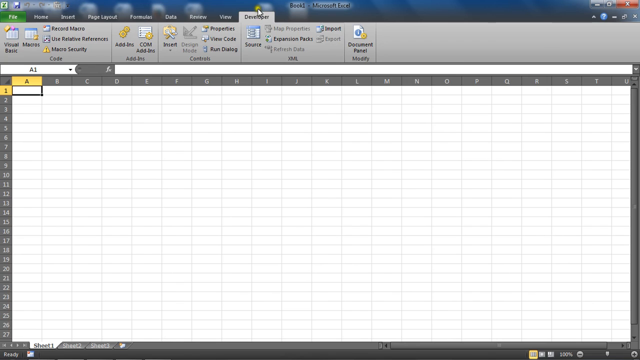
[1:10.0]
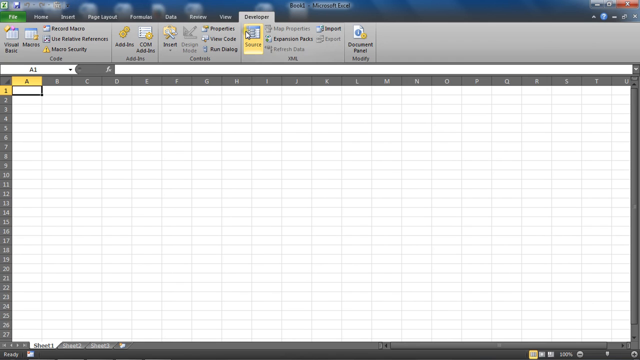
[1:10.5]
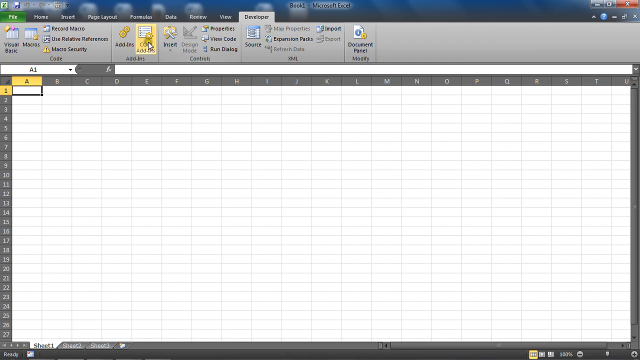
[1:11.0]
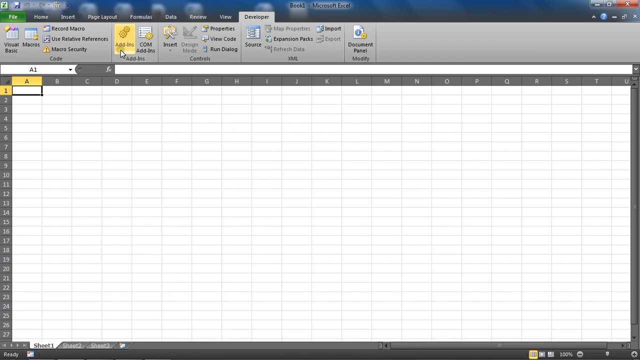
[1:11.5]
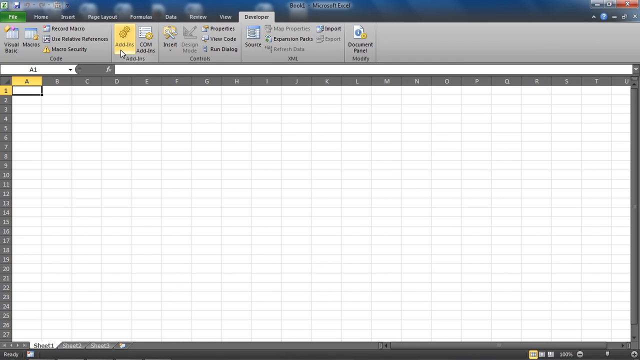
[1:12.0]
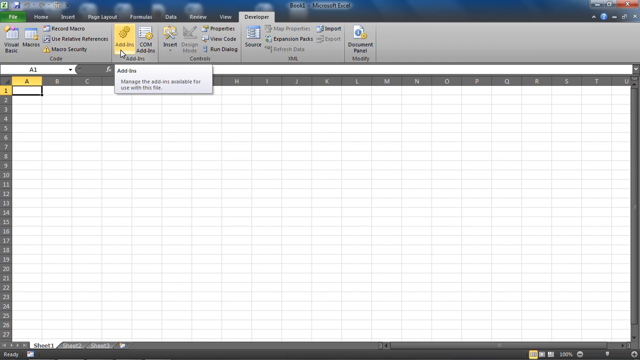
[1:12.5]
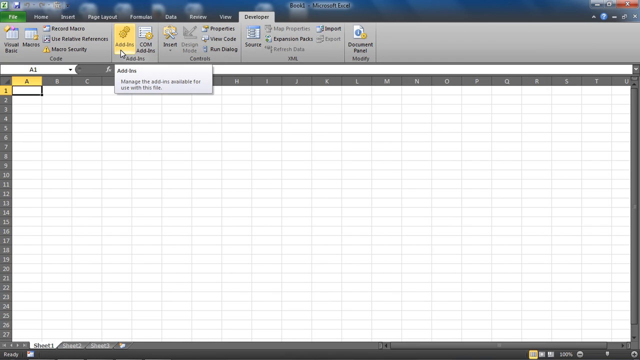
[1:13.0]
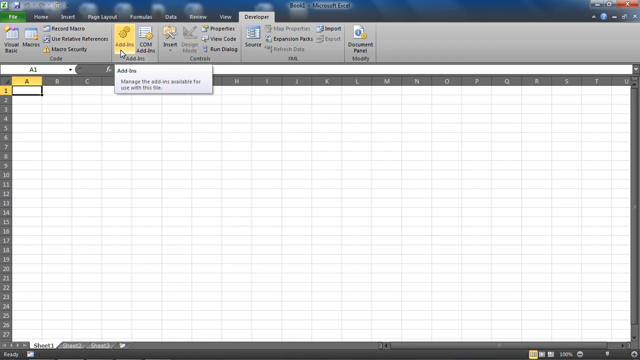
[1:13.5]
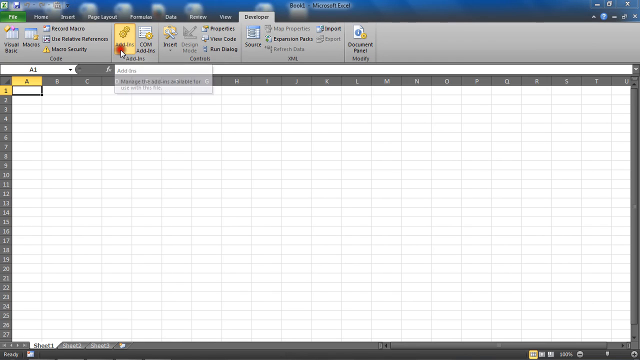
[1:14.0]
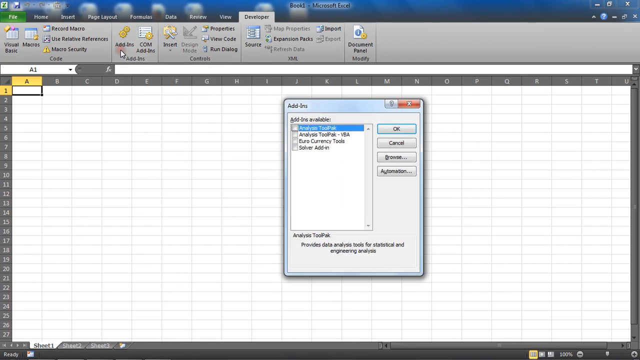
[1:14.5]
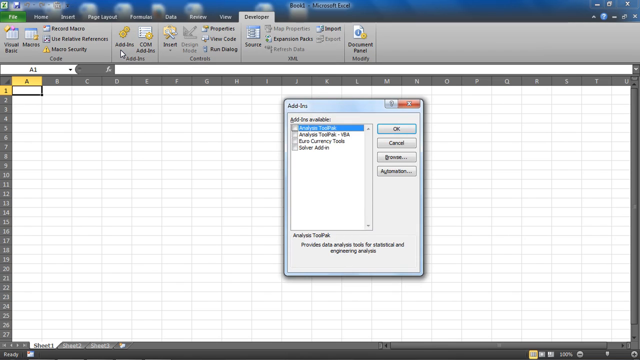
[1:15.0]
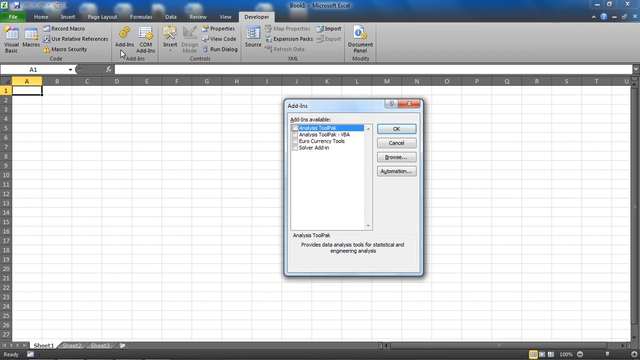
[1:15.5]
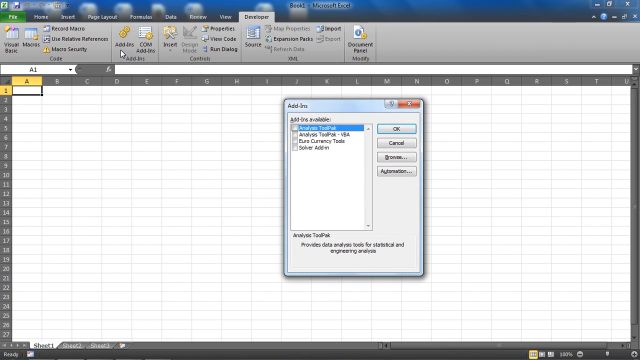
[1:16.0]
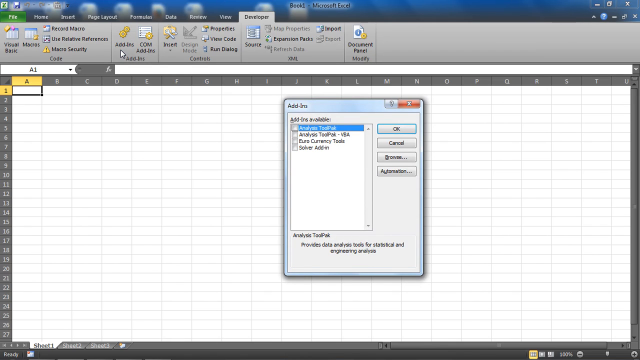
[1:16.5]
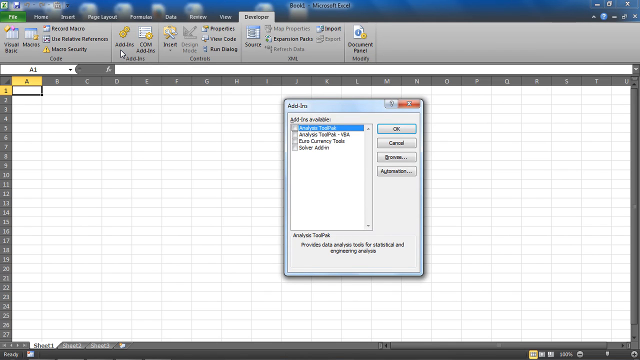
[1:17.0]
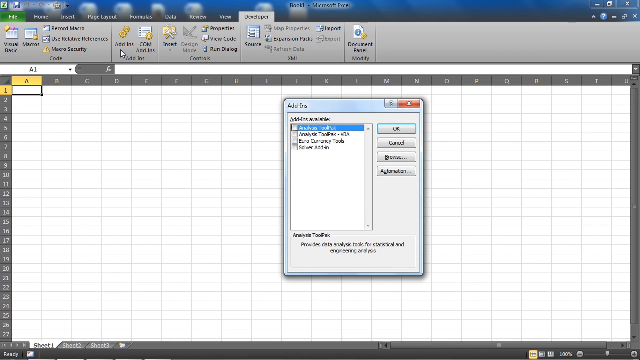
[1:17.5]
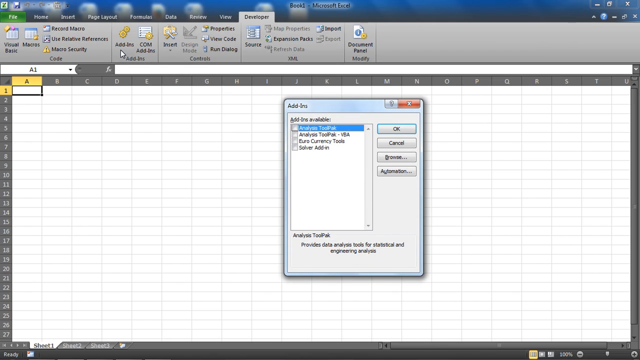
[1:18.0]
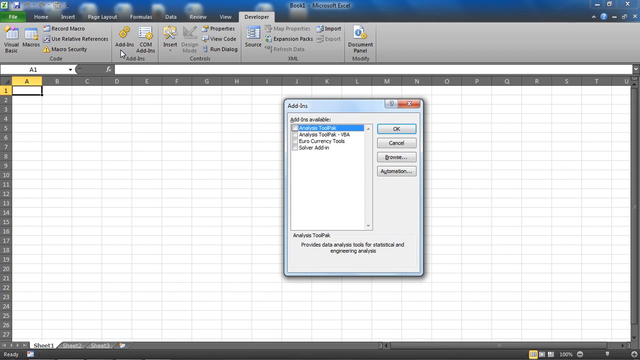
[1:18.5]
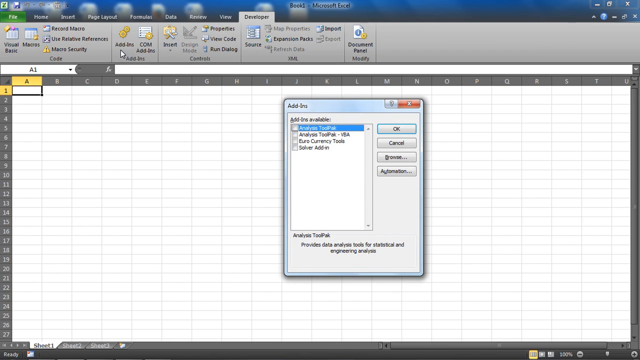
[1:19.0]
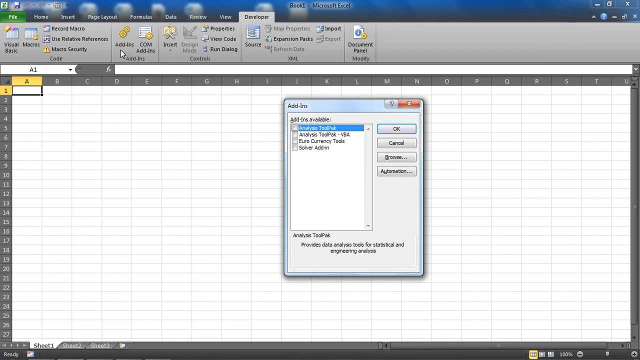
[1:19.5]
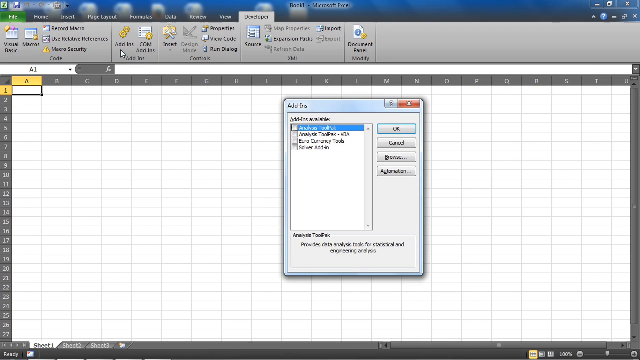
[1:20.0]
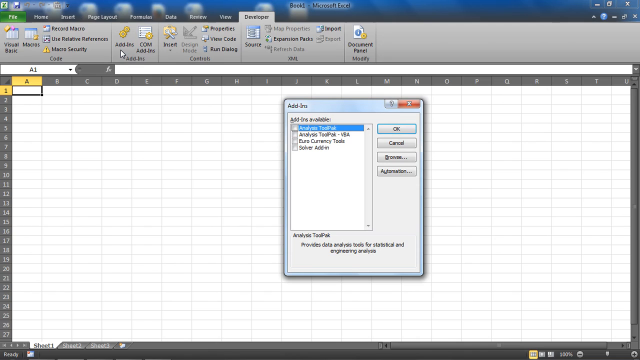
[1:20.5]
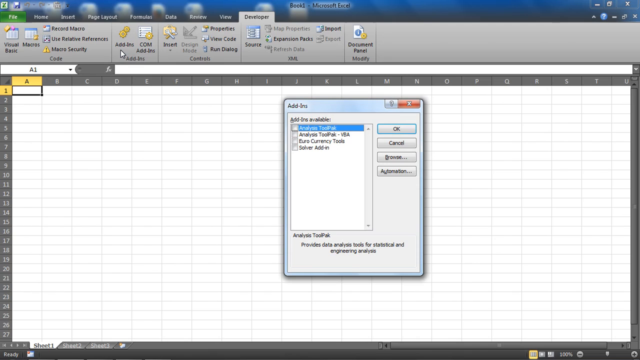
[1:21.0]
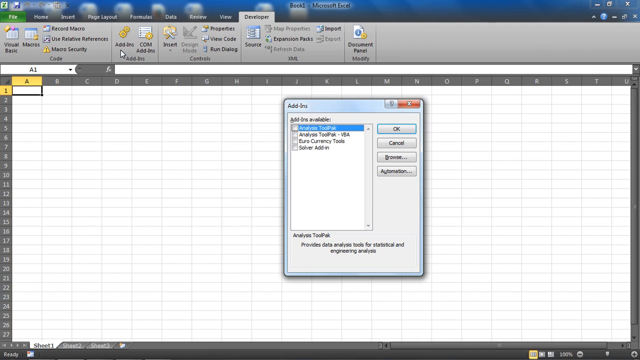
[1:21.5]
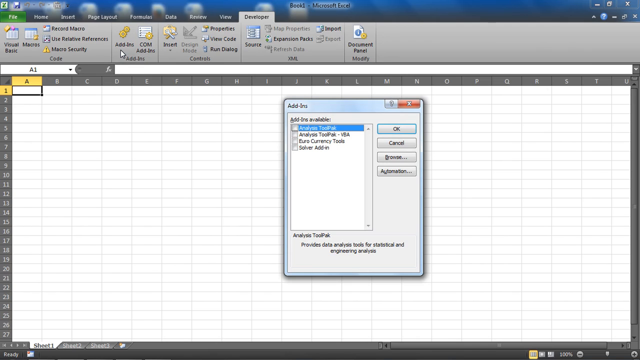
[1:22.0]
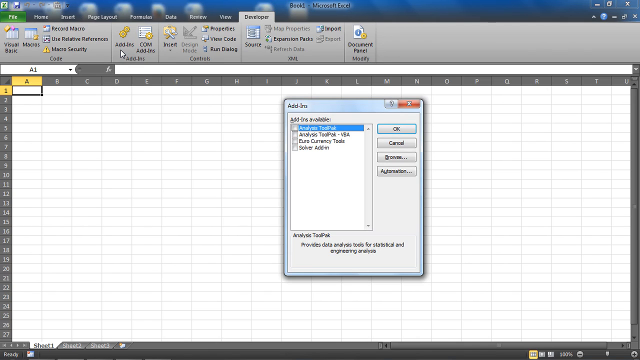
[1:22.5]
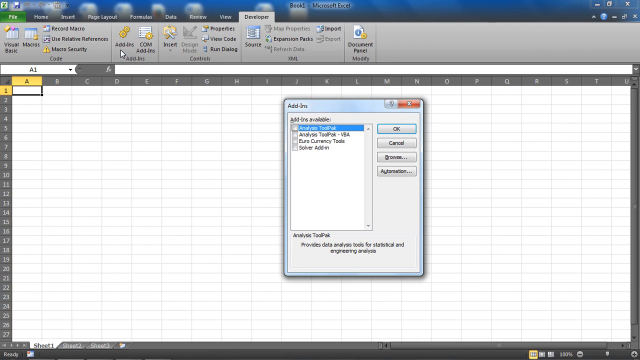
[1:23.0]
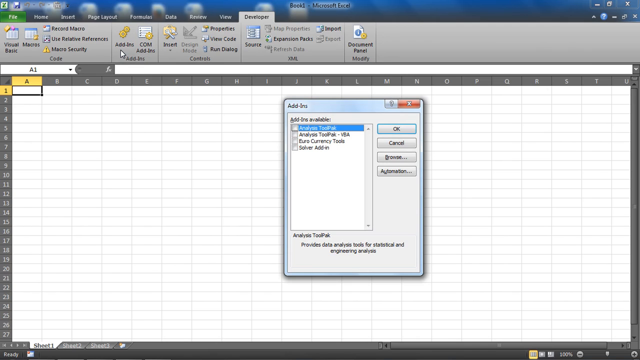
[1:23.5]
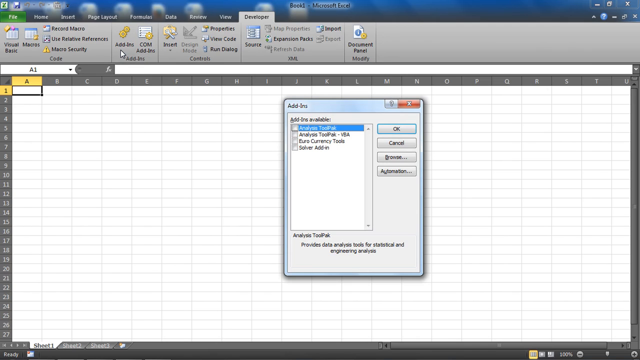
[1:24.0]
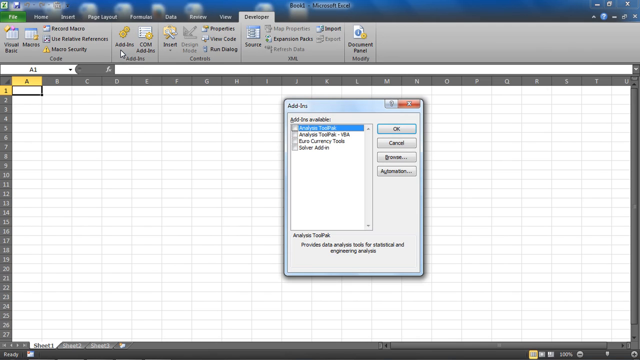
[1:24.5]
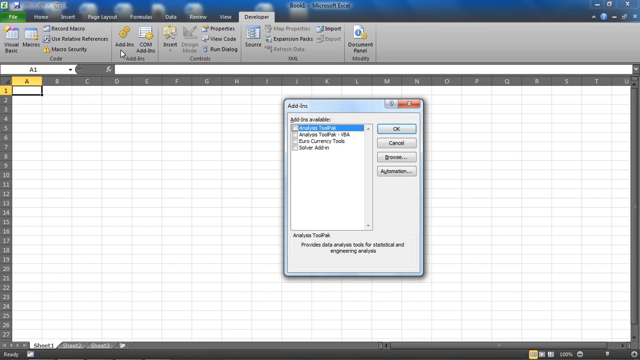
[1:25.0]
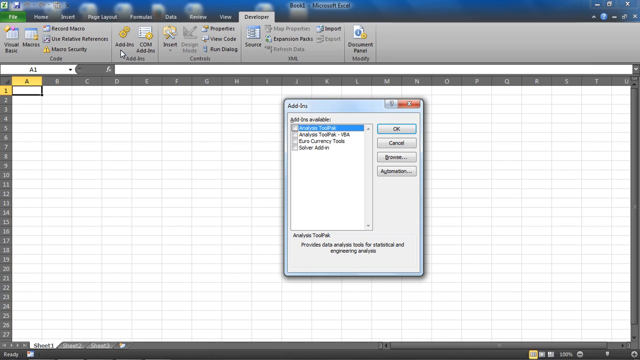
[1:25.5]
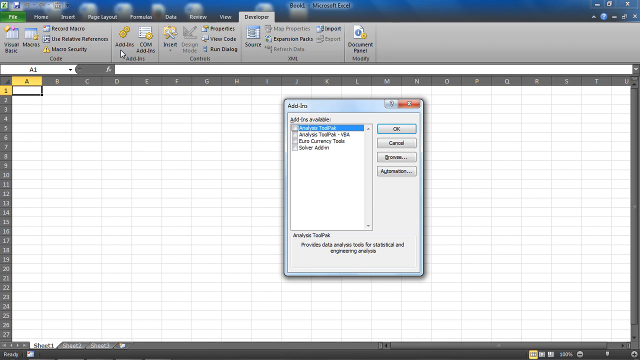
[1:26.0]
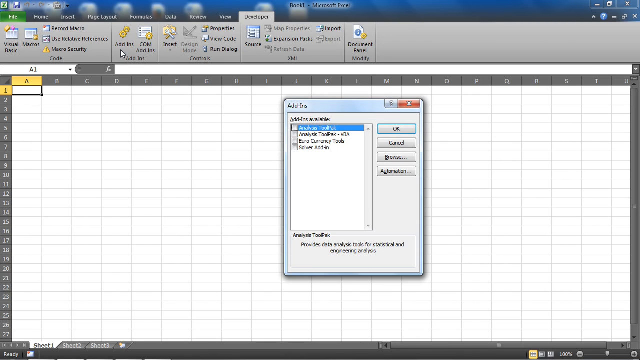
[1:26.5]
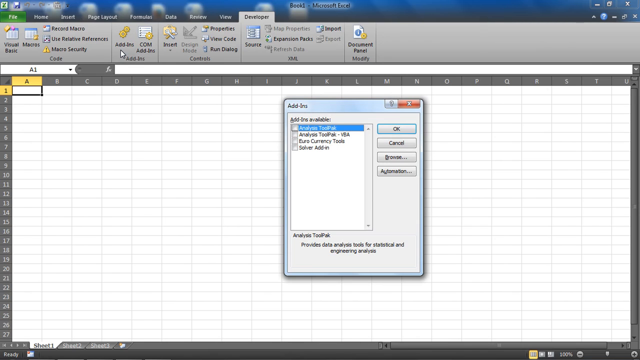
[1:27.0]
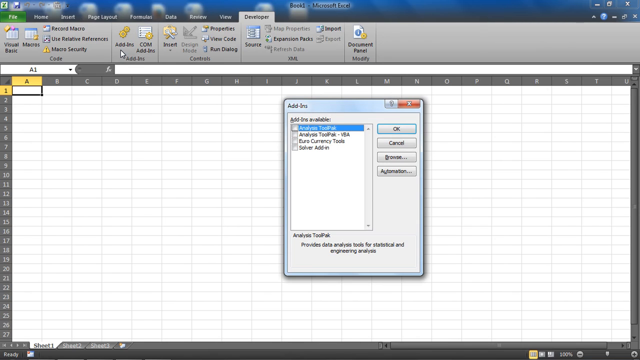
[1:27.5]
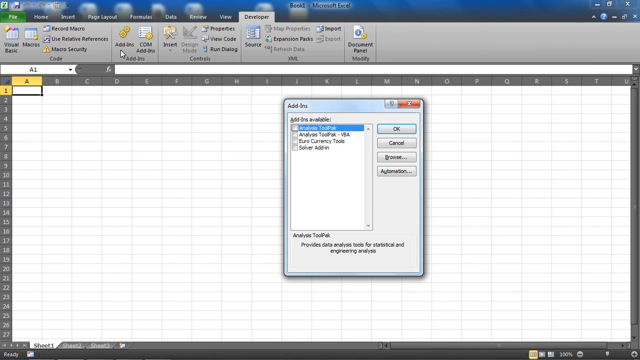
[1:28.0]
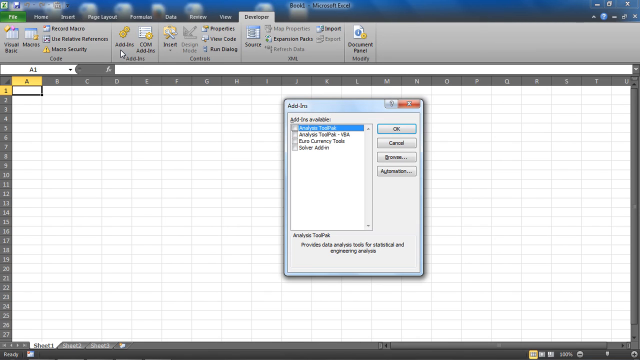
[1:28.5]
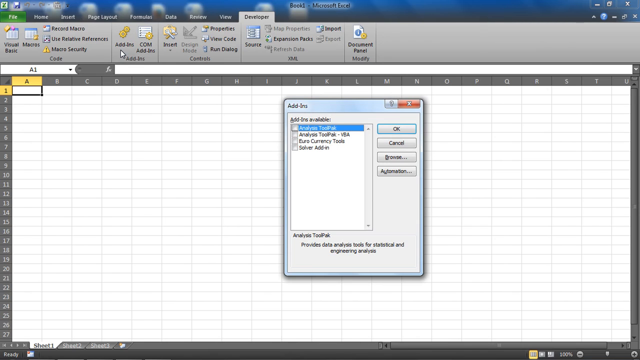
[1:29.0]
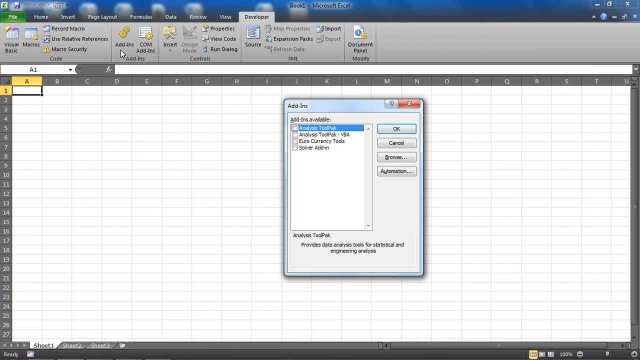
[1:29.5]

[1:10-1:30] The selected tab at the top is the last of about seven or eight and says "Developer"; the leftmost tab says File and the next one is Home. Several choices appear below it, and the toolbar is pretty busy. The cursor moves to and rests on one that says "Add-ins", which is highlighted in kind of orange while everything else is grayish. A small box below it shows "Add-ins" in bold and a line and a half of text: "Manage the add-ins available for use with this file." A click registers as a short, quick dark red dot, and a window that is not huge appears in the middle of the screen on top of the Excel file. It says "Add-ins" in the upper left and lists four choices in a field, each with an empty checkbox to its left. The cursor stays up at Add-ins and does not come down to this window. The top choice is in blue, but its text cannot be read. To the right are four buttons: OK, Cancel, Browse, and apparently Automation. The screen stays still for about 10 seconds with the window just sitting there.